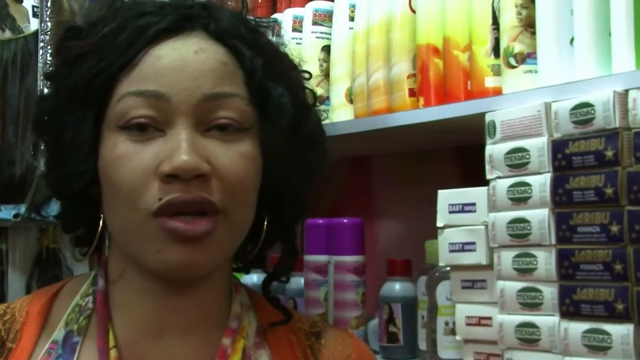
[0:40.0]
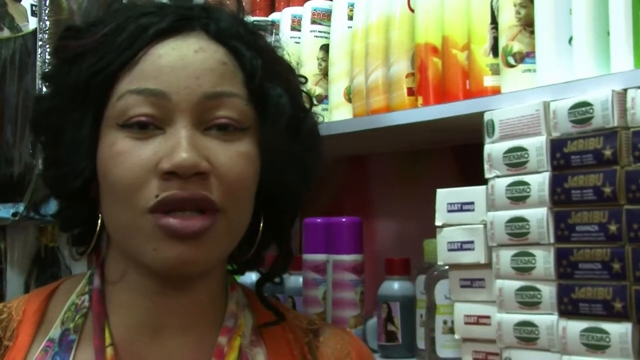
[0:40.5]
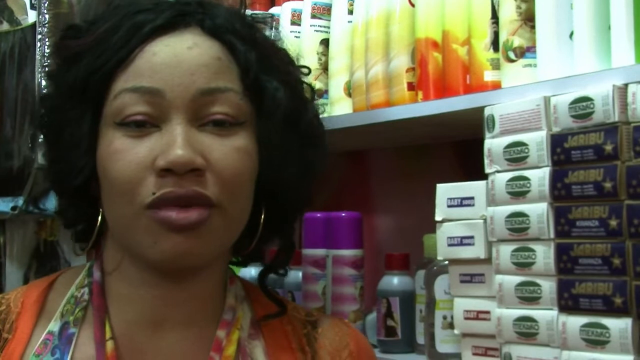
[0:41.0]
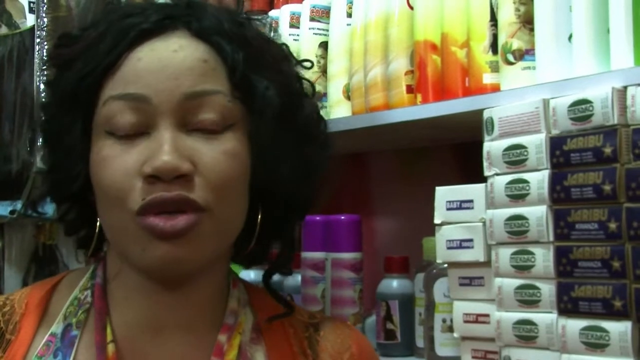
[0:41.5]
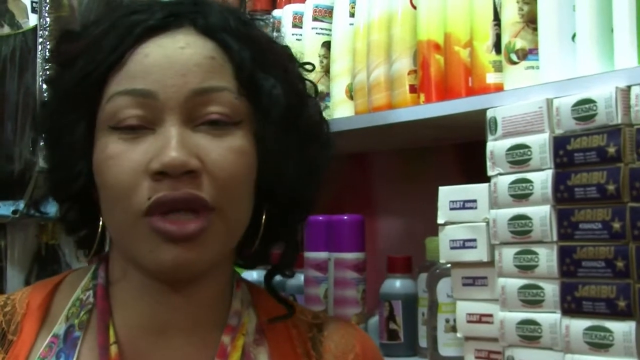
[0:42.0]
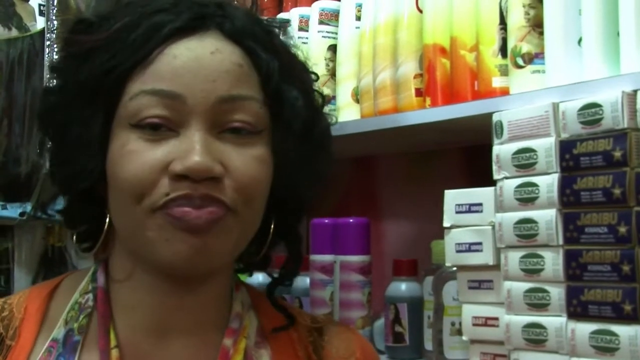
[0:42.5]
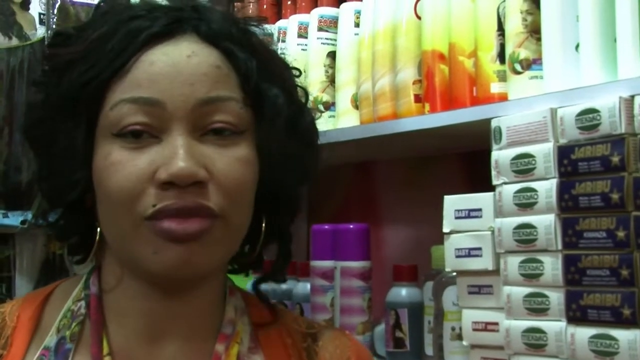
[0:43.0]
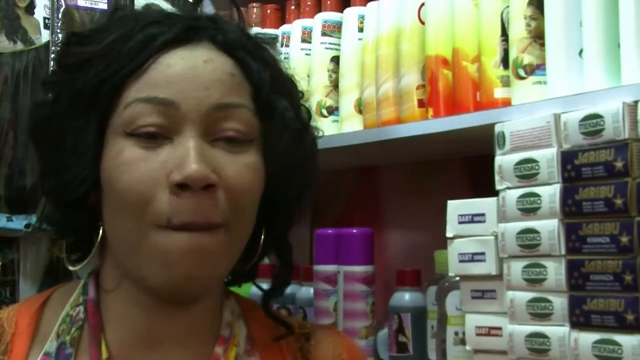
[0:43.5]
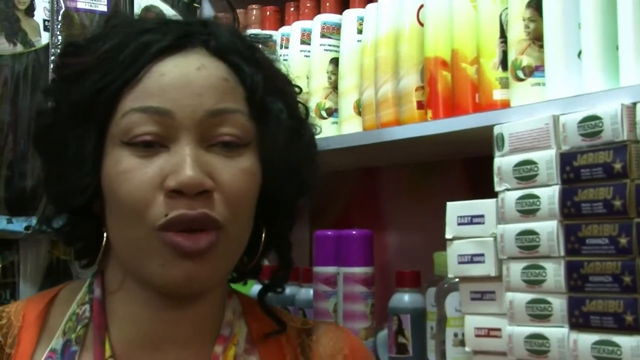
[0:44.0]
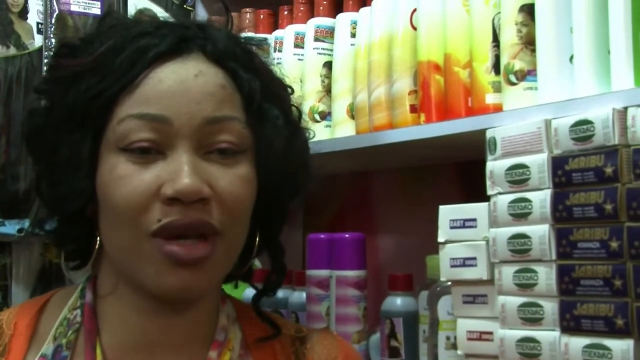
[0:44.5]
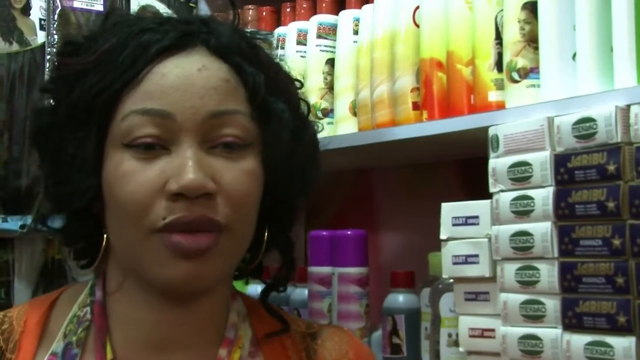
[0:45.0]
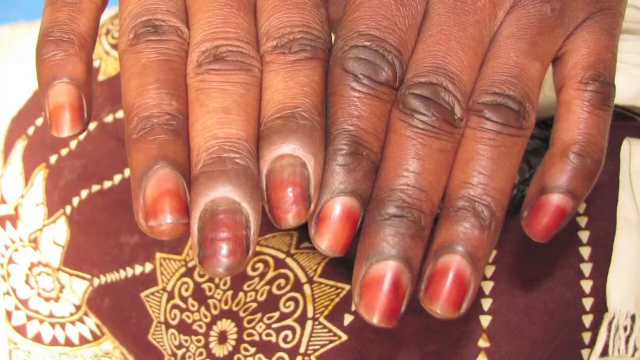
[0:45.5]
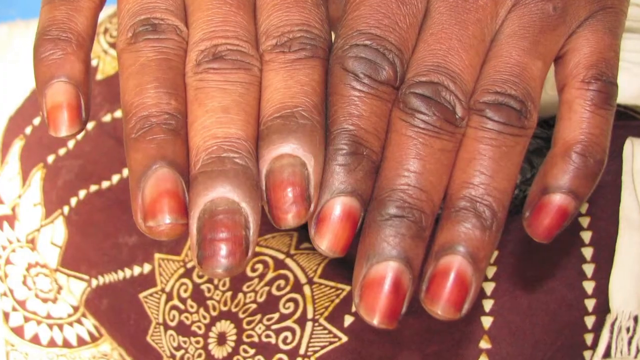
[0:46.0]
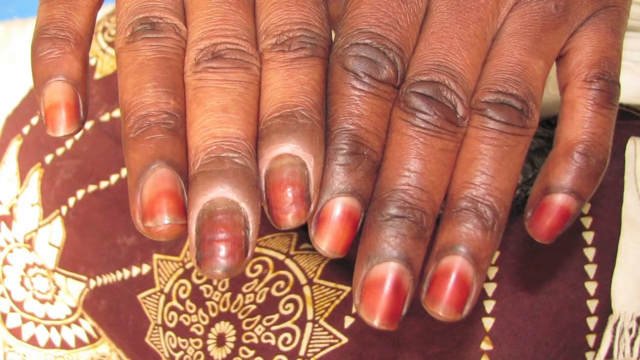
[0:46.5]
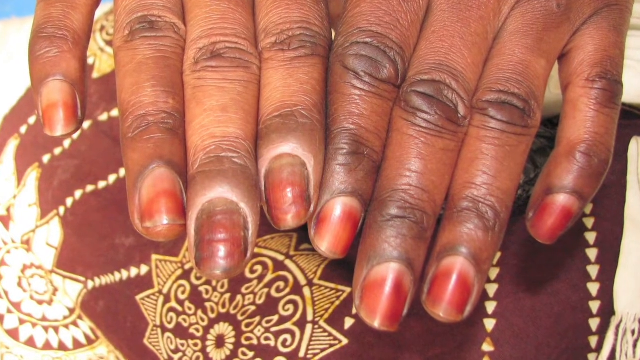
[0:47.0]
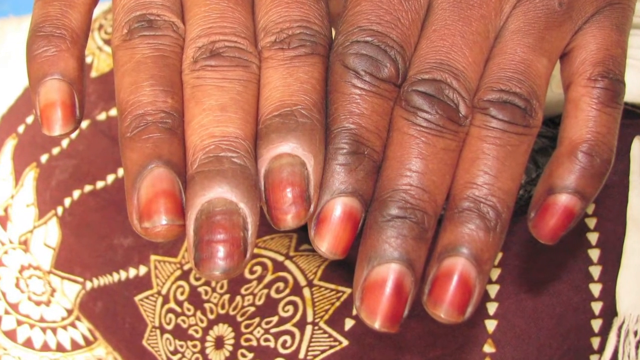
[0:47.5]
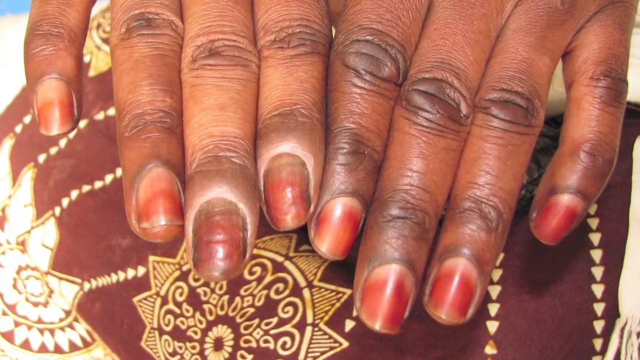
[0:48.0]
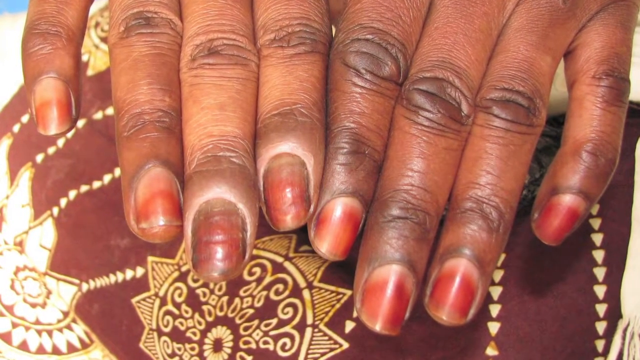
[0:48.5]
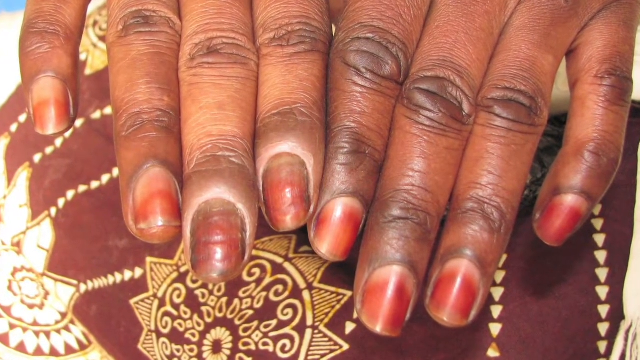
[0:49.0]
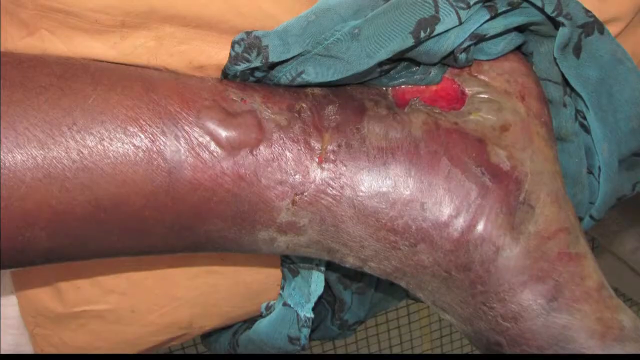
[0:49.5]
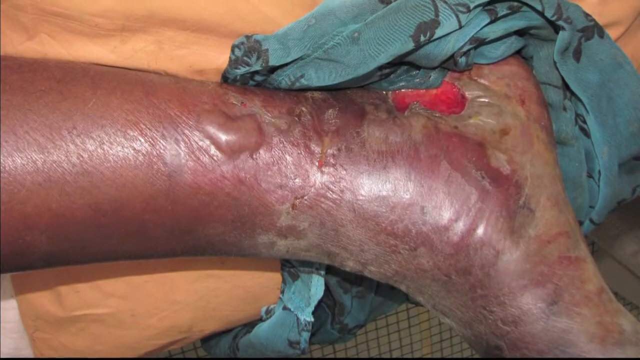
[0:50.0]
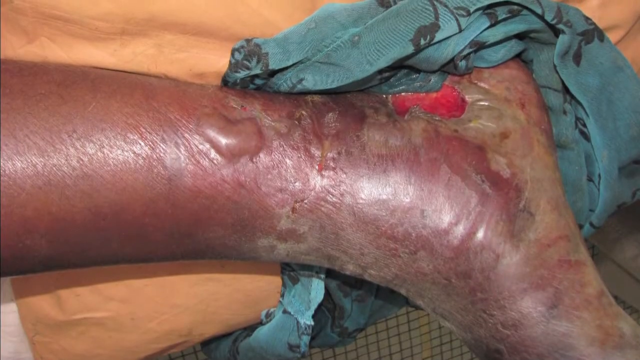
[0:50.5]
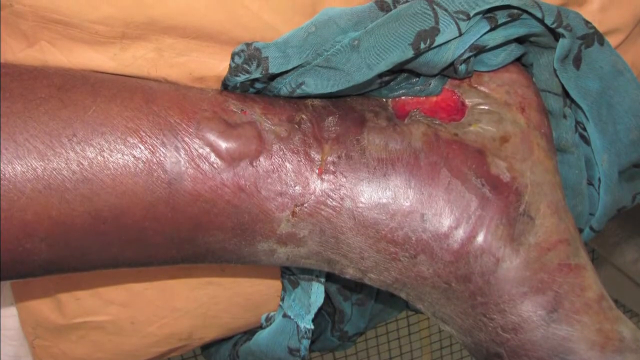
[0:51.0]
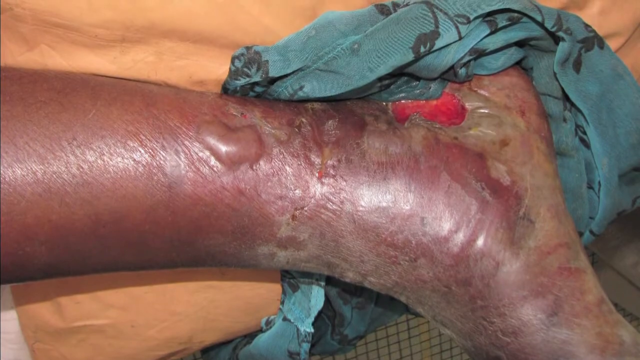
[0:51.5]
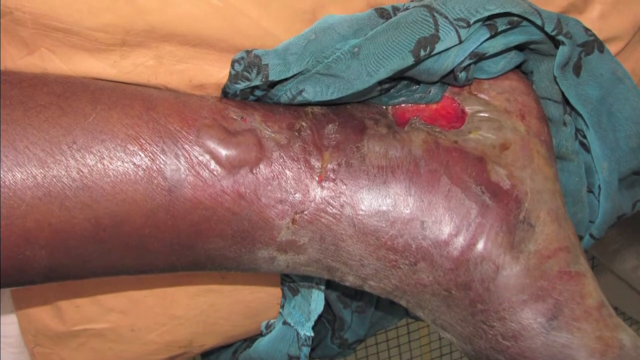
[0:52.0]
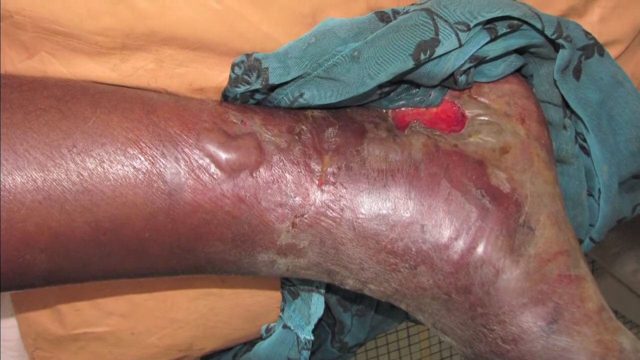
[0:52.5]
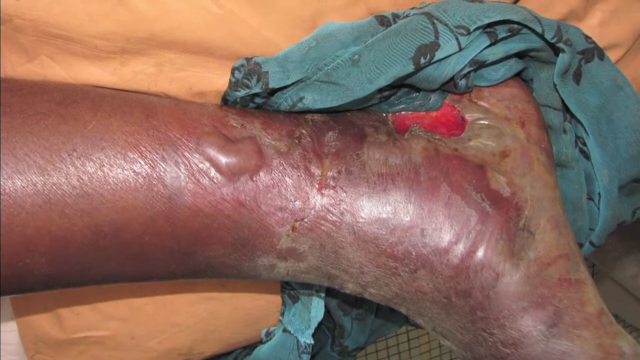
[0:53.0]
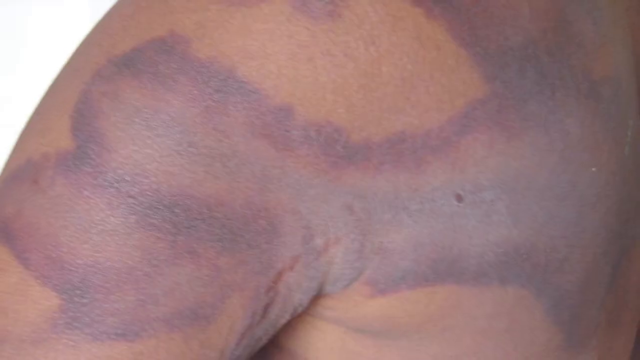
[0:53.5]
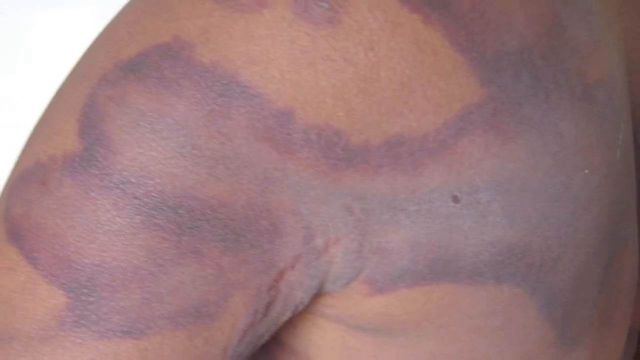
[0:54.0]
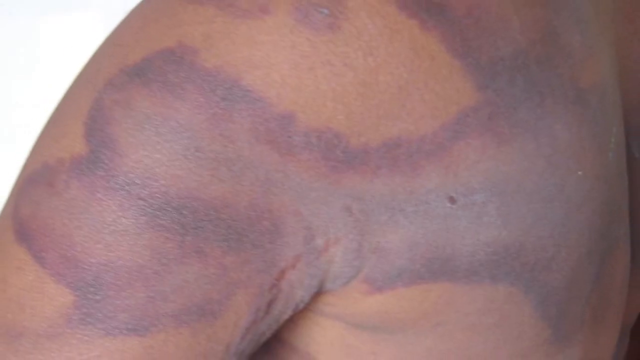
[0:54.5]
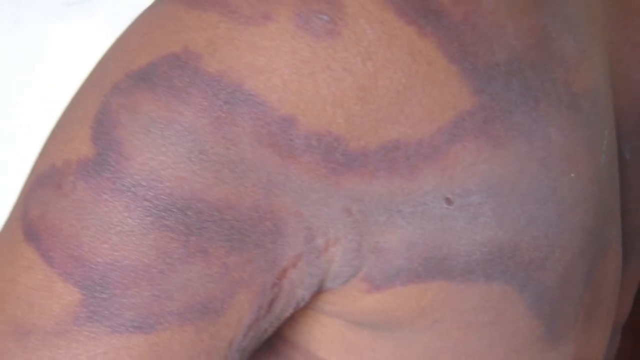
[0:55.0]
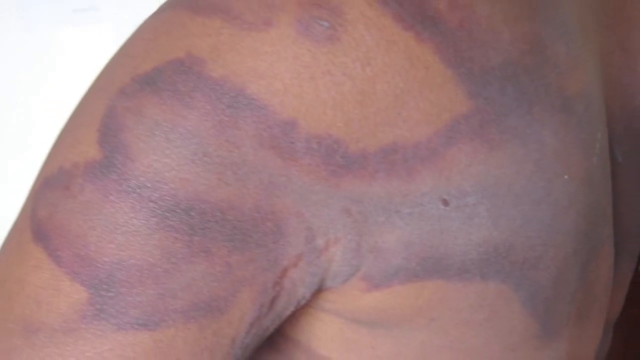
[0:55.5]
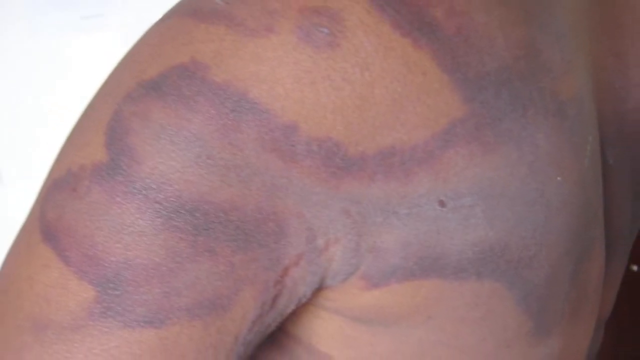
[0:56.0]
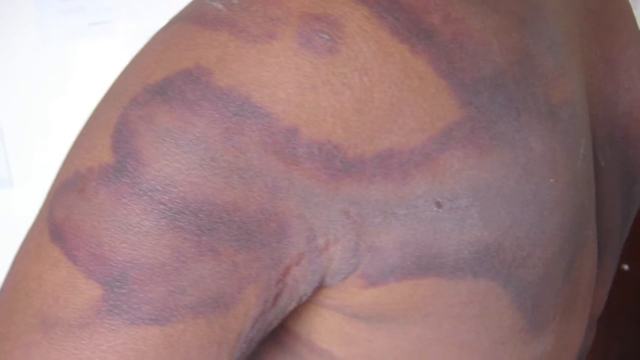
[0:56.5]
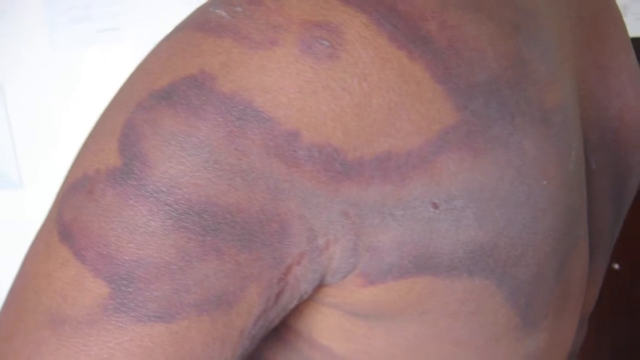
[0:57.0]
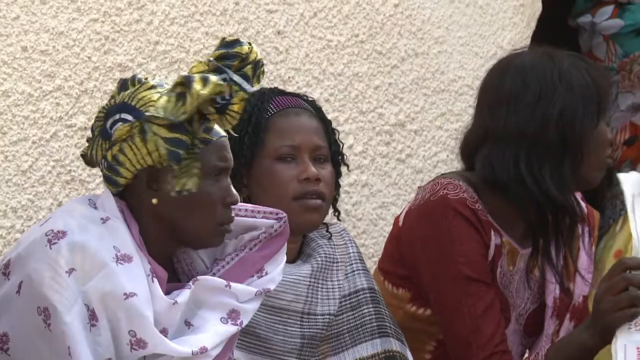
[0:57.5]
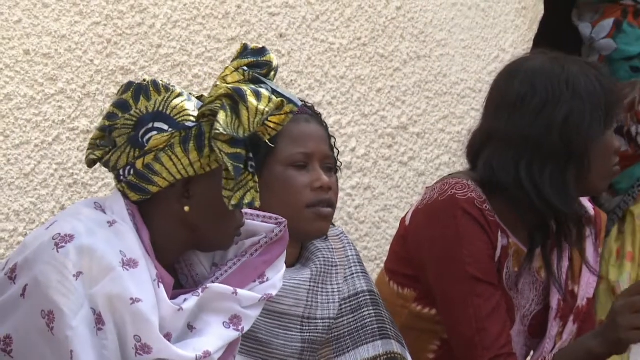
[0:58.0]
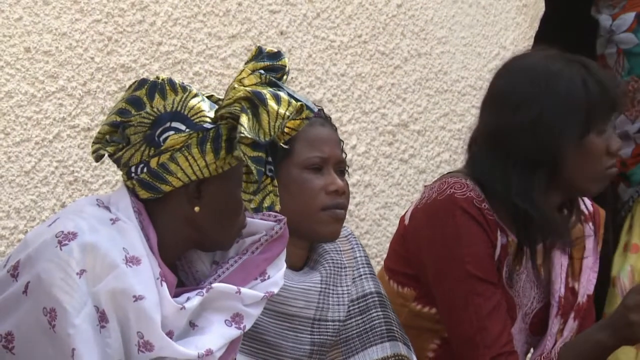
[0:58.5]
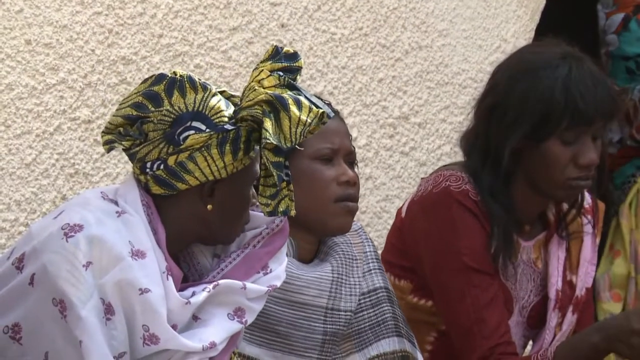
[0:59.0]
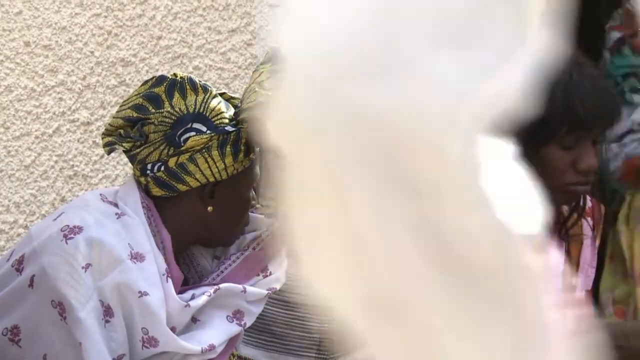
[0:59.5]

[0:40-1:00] A Black woman speaks in a store in front of beauty products that are boxed and in containers on very well-stocked shelves behind her. A pair of hands is shown side by side, resting on a decorative garment; the right hand is much lighter than the left, especially around the fingernails. Next, a person's ankle is very swollen with blisters, one of which has popped open, showing very red raw skin underneath. Someone else's skin looks like it has been burned and is purple, while the rest of the skin remains black. Women in another country sit outside, wearing head wraps and very colorful outfits.